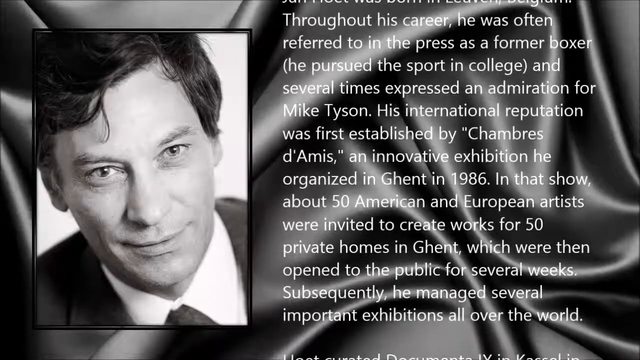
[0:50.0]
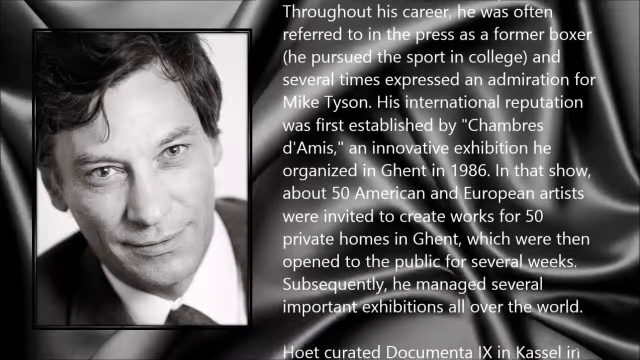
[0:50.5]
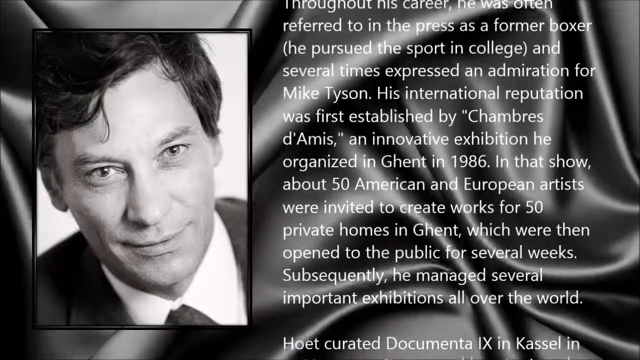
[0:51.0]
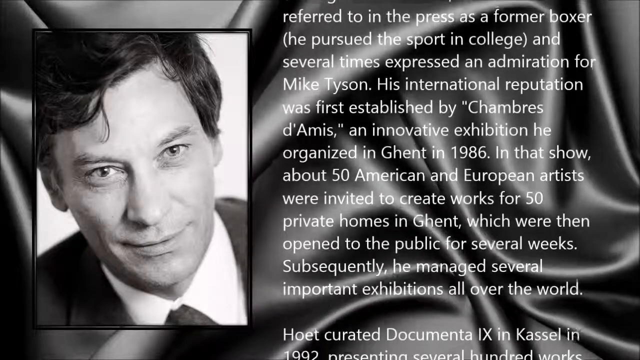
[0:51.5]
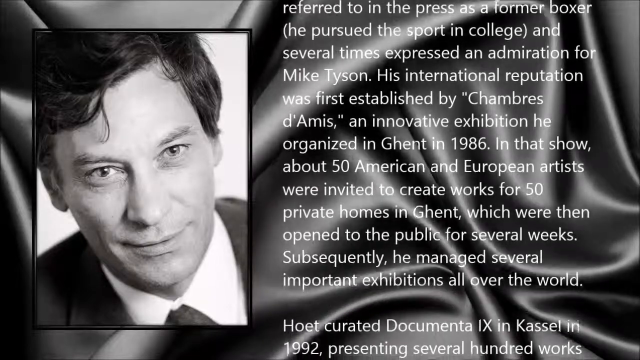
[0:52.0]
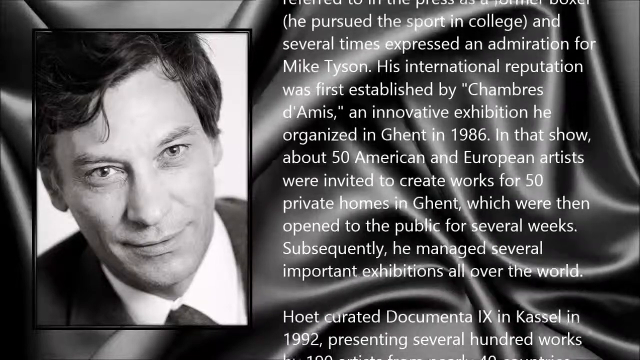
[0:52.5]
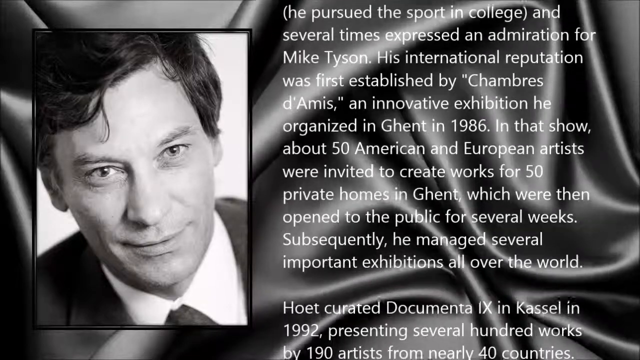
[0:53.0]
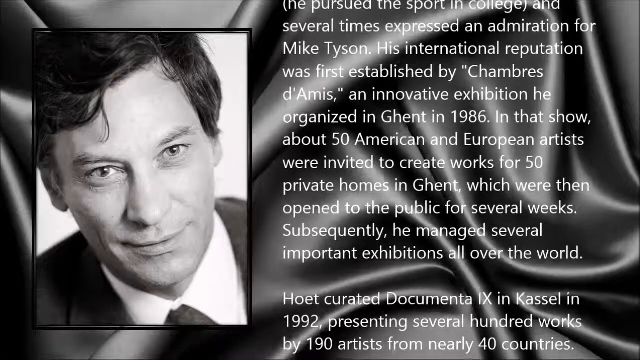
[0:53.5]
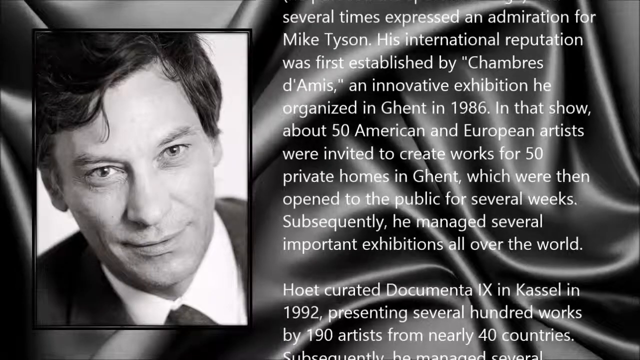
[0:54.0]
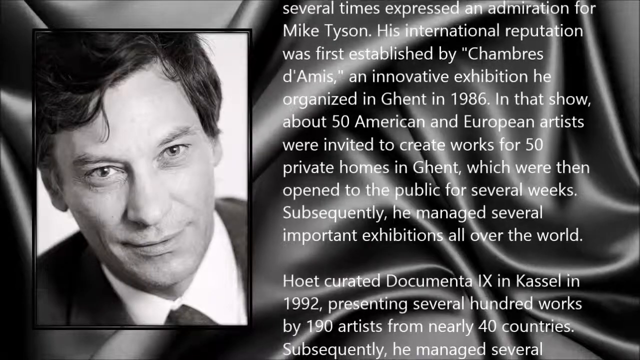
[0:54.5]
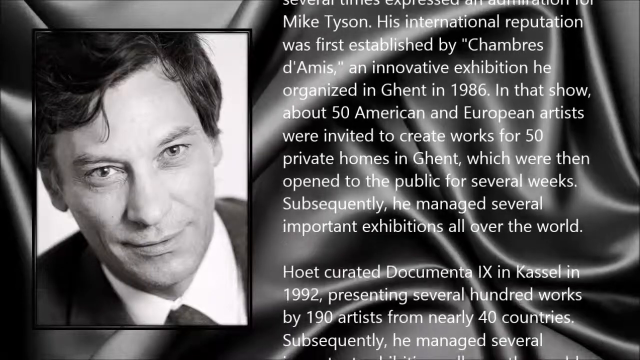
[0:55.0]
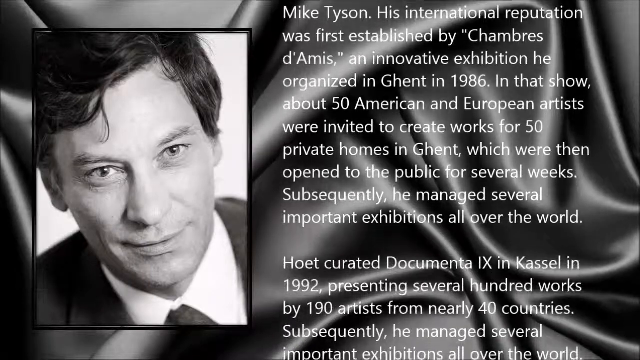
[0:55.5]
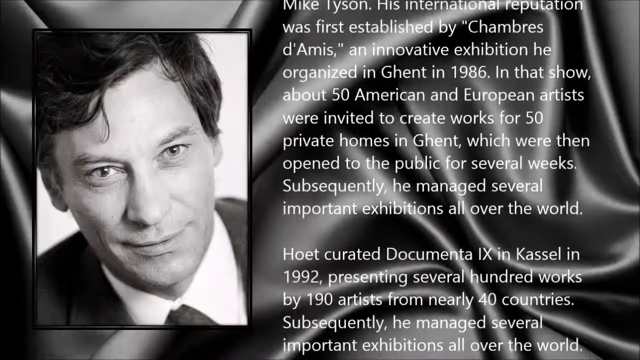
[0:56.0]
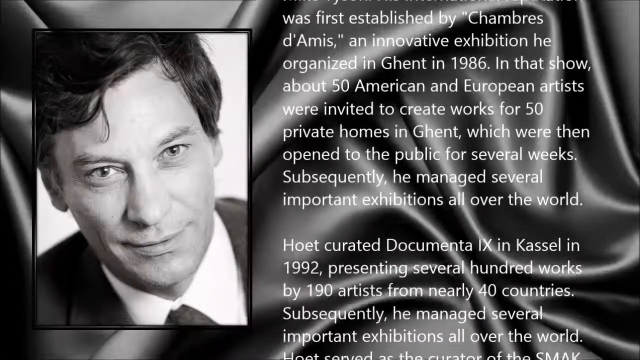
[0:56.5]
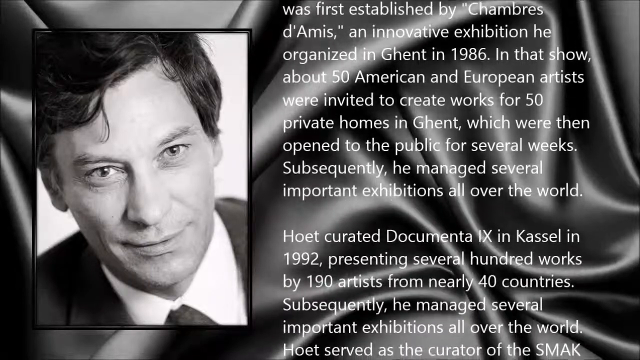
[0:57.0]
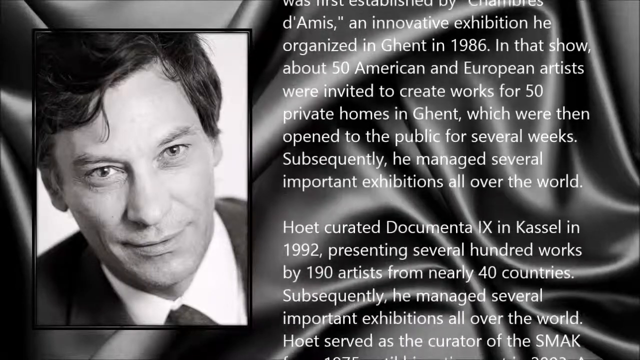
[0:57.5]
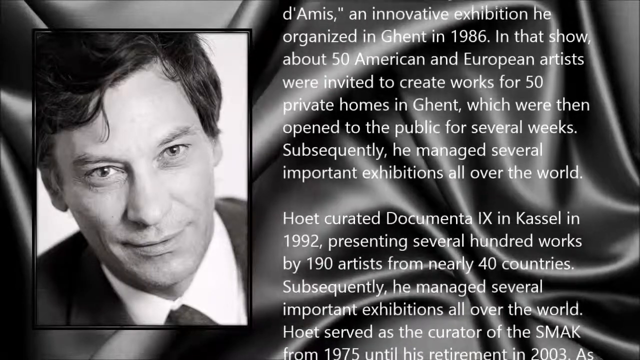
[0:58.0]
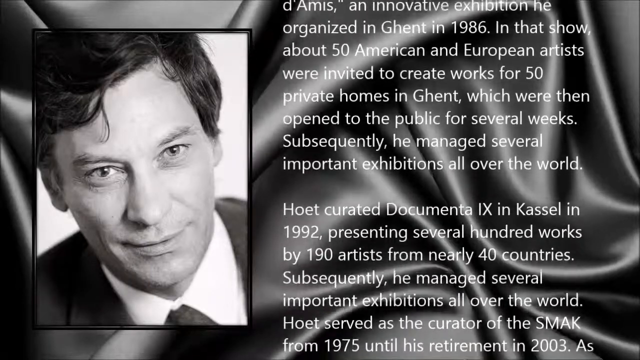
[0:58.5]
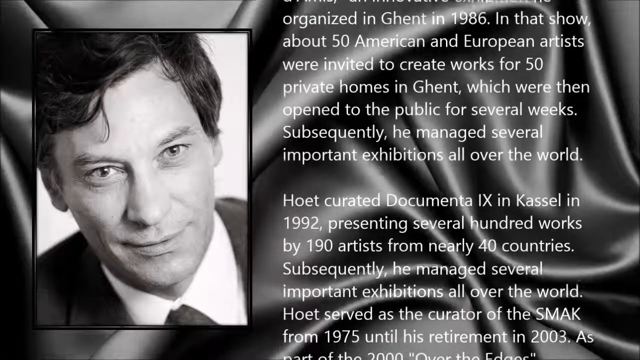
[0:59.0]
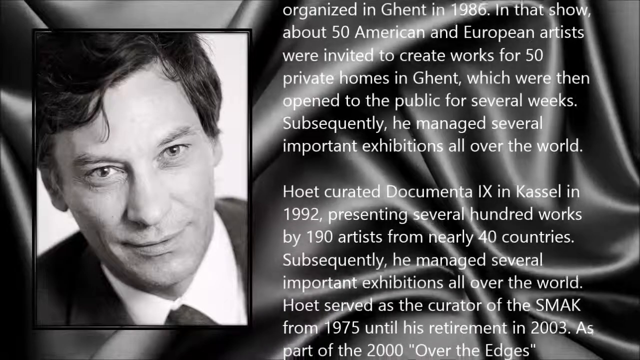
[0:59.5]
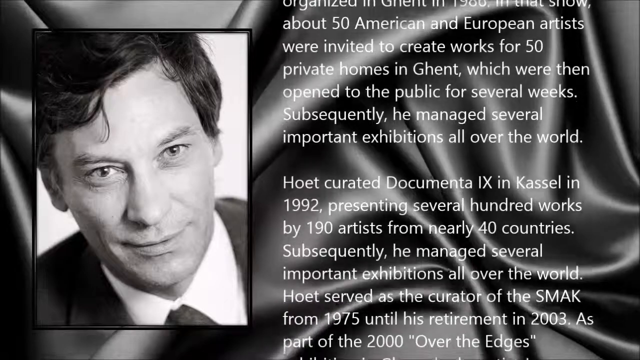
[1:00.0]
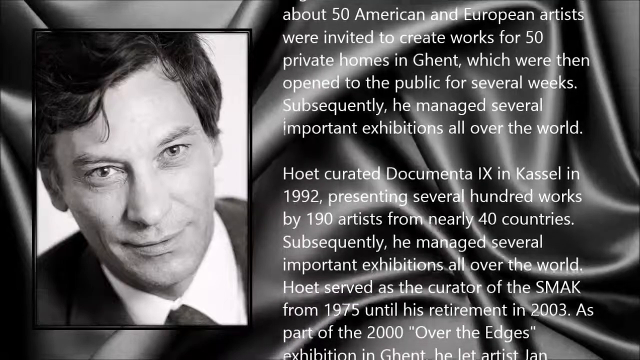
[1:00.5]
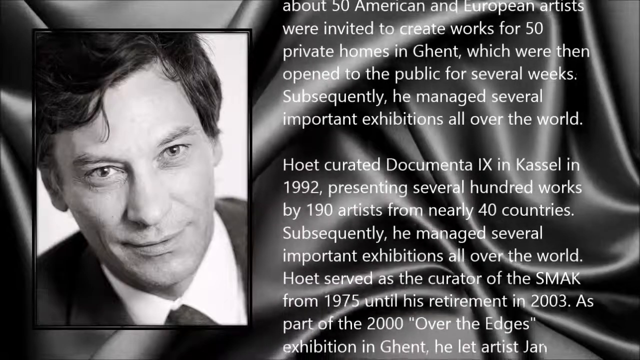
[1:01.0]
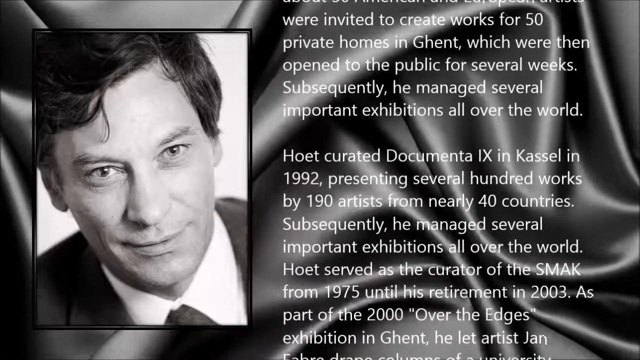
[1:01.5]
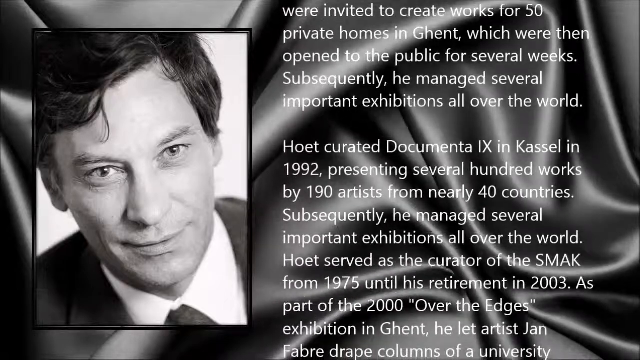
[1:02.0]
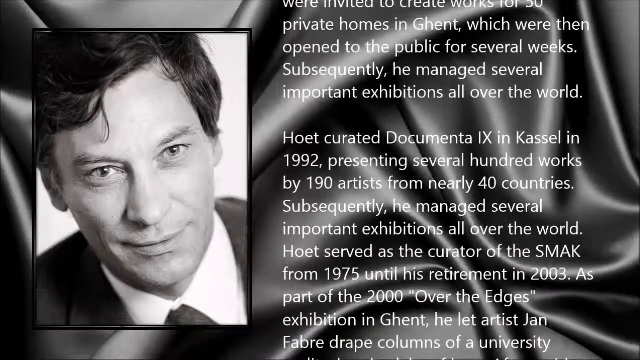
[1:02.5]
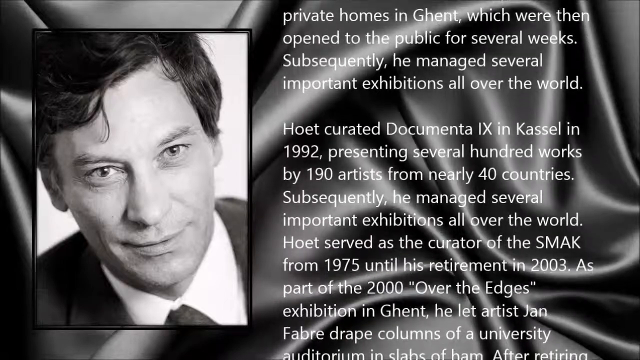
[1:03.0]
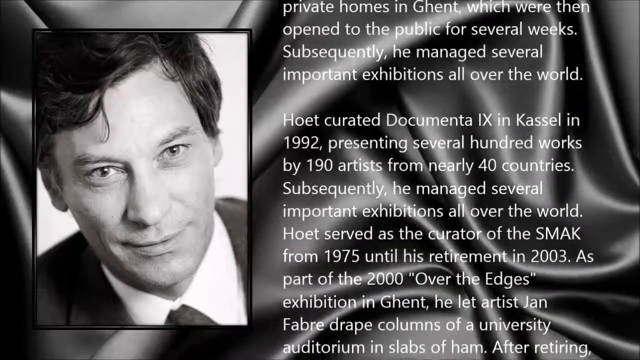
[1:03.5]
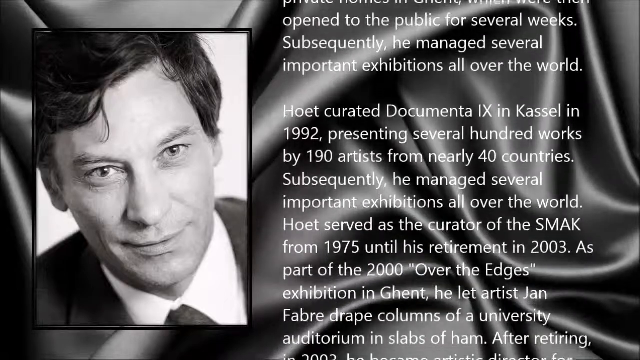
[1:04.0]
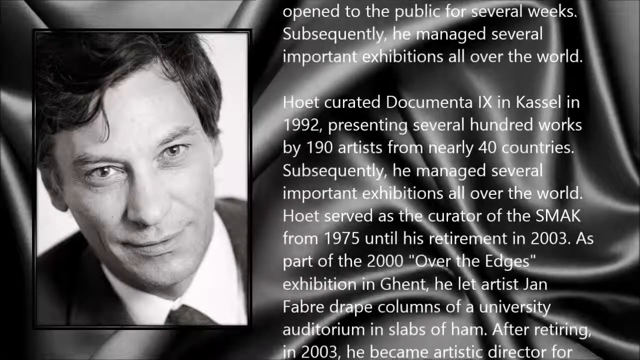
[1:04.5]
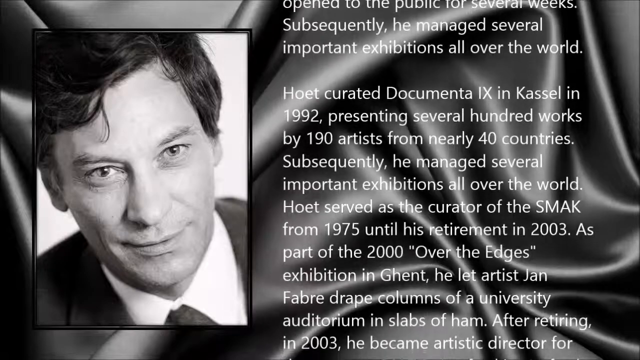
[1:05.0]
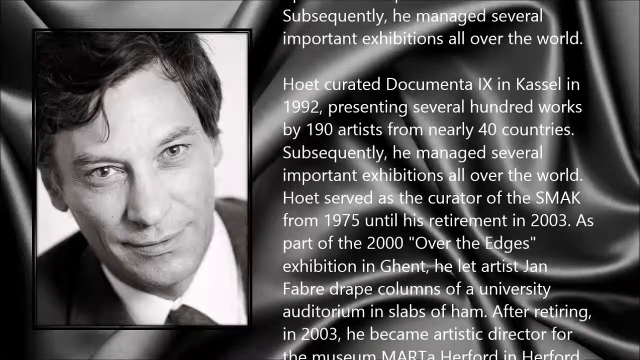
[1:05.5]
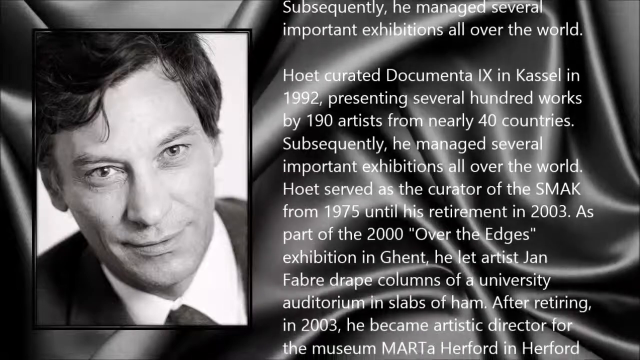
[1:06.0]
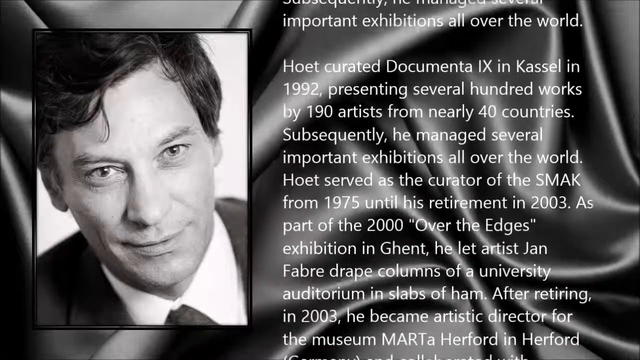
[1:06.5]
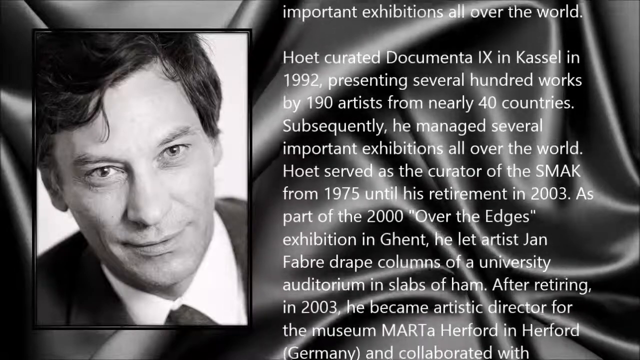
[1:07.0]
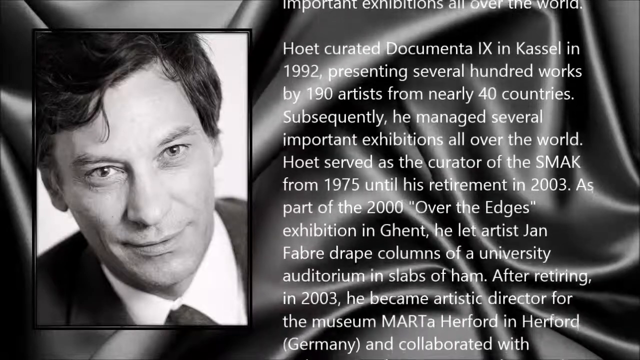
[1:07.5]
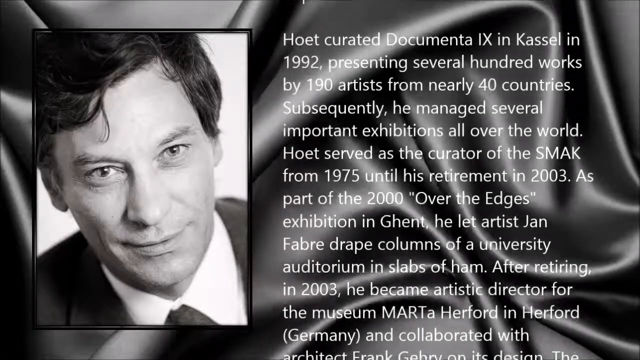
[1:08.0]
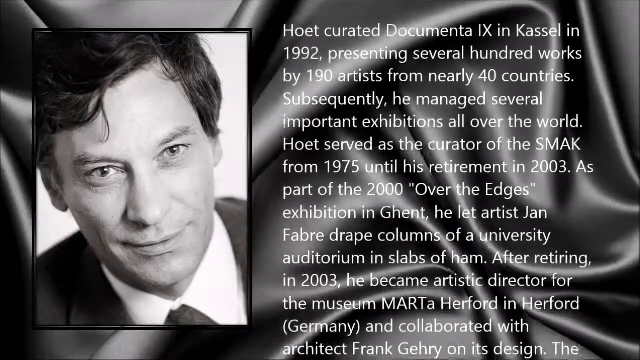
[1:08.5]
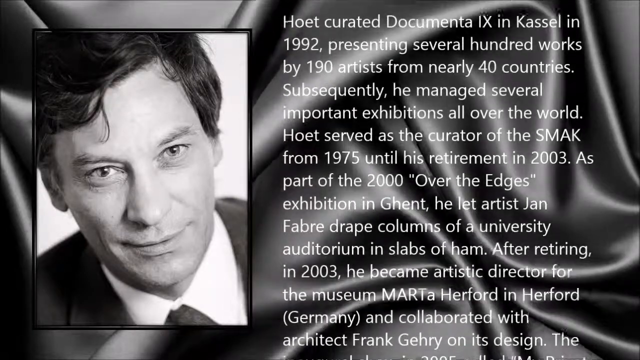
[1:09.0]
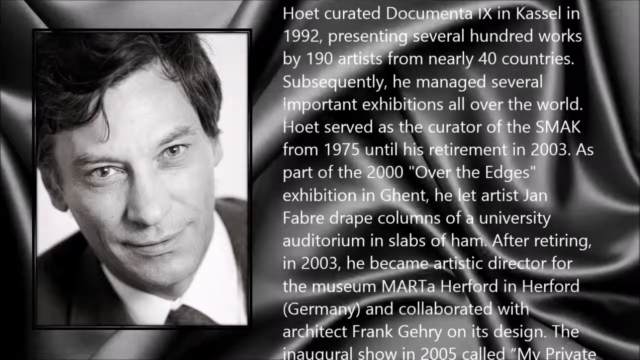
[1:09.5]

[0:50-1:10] More text comes onto the screen while the satin or silk material is still visible in the background. Occasionally there is a slight twitch on the screen, like a distortion. The text continues: "Hoet curated Documenta IX in Kassel in 1992, presenting several hundred works by 190 artists from nearly 40 countries. Subsequently he managed several important exhibitions all over the world." It goes on: "Hoet served as the curator of" the museum "from 1975 until his retirement in 2003. As part of the 2000 Over the Edges exhibition in Ghent, he let artist Jan Faber drape columns of a university auditorium in slabs of ham. After retiring in 2003, he became an artist, director for the Museum MART in Herford, Germany, and collaborated with architect Frank Gehry on its design." The video then moves on quickly and jumps forward, so the text after that sentence is hard to read.